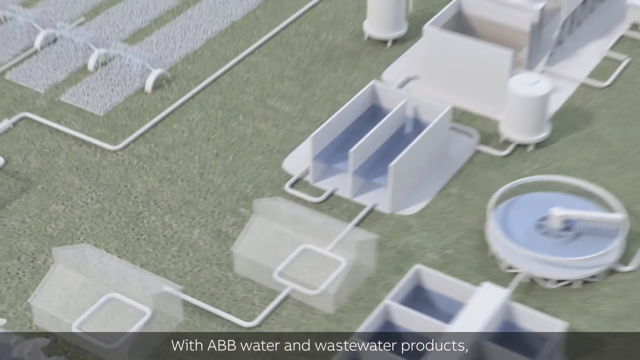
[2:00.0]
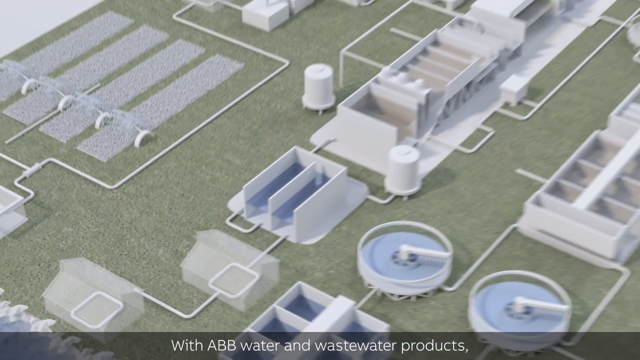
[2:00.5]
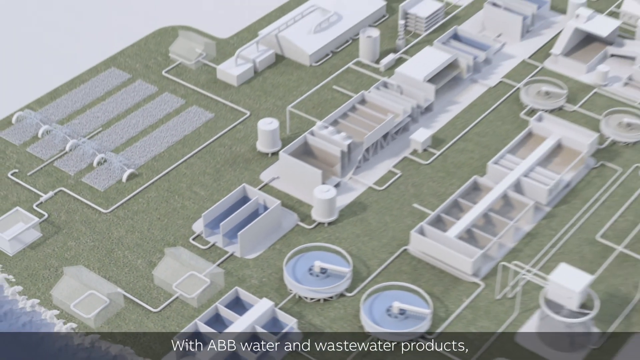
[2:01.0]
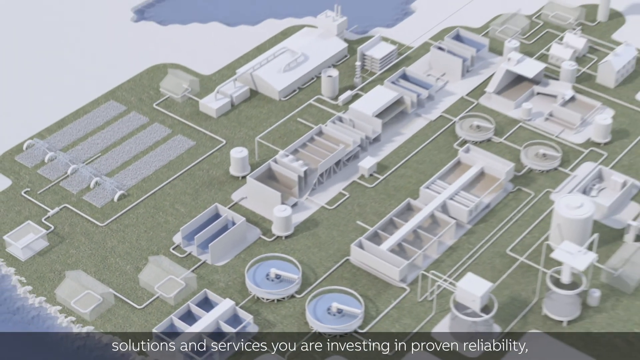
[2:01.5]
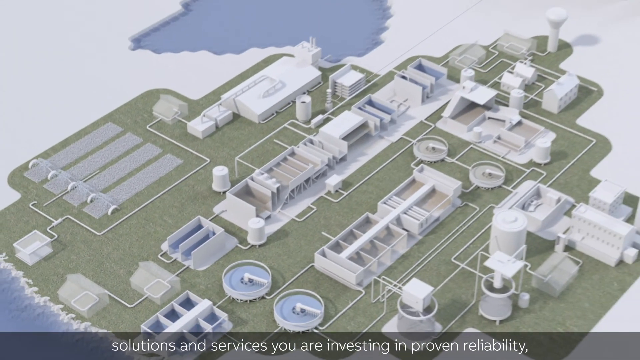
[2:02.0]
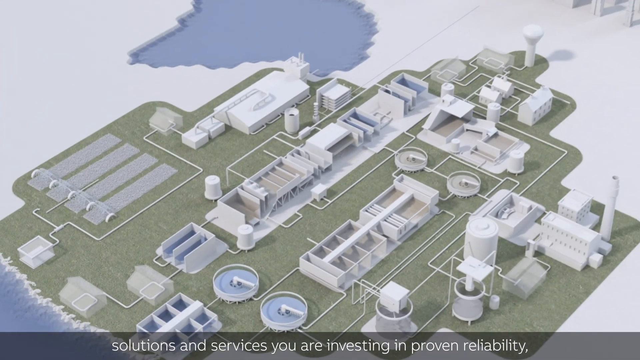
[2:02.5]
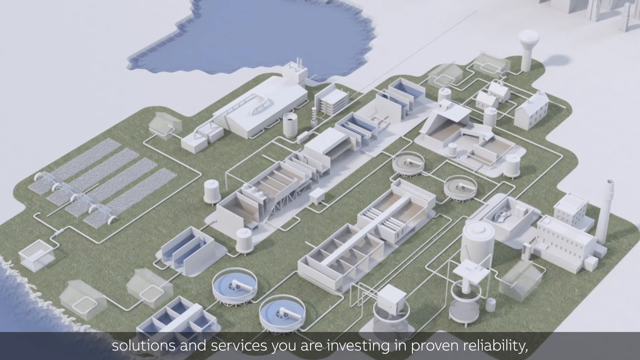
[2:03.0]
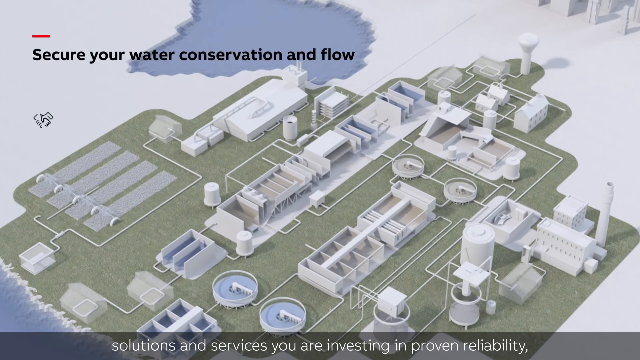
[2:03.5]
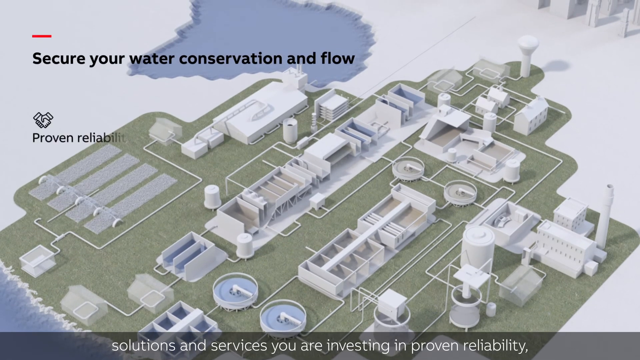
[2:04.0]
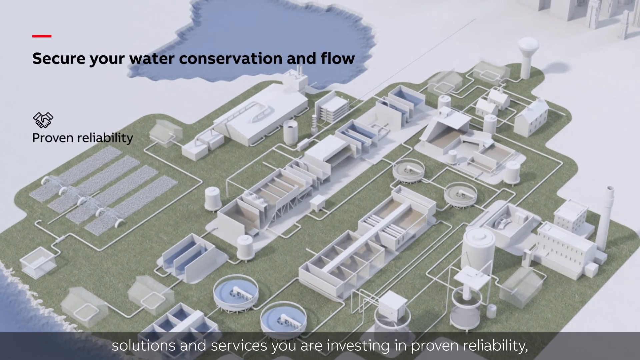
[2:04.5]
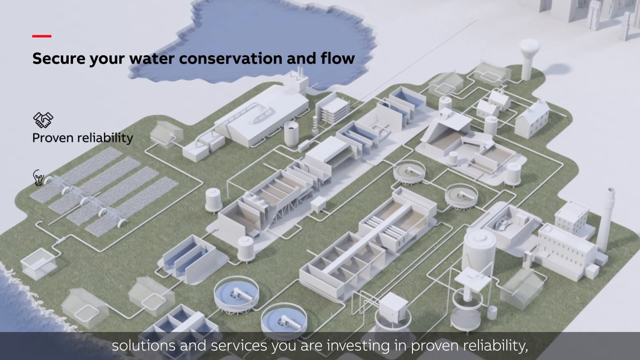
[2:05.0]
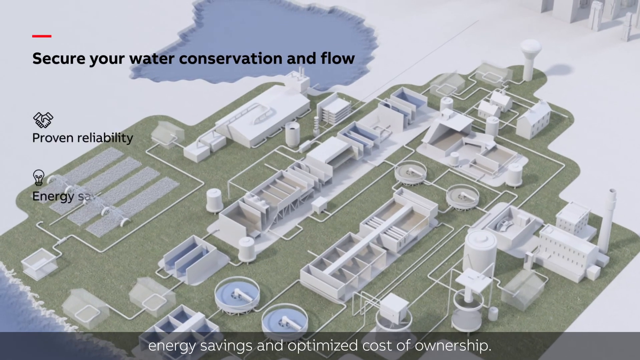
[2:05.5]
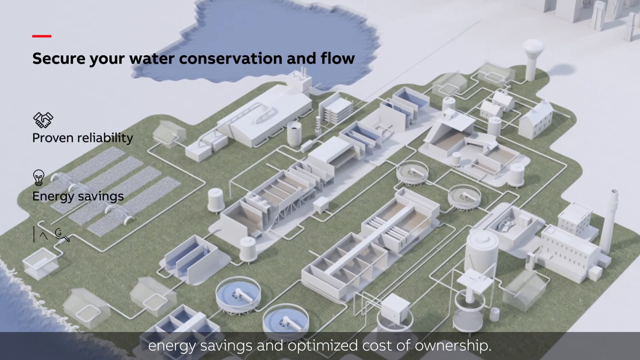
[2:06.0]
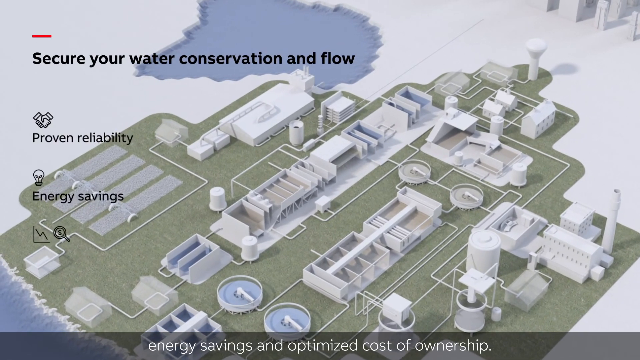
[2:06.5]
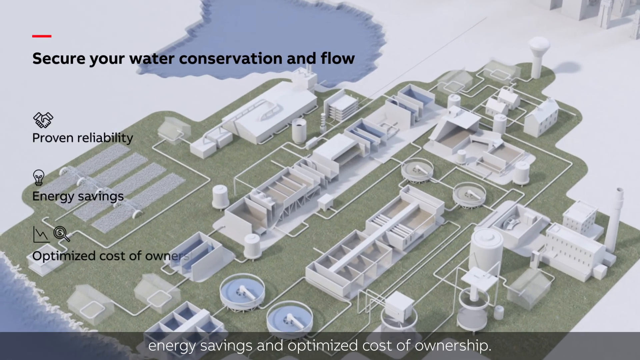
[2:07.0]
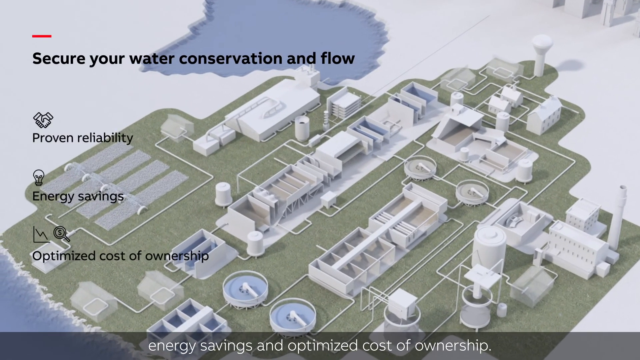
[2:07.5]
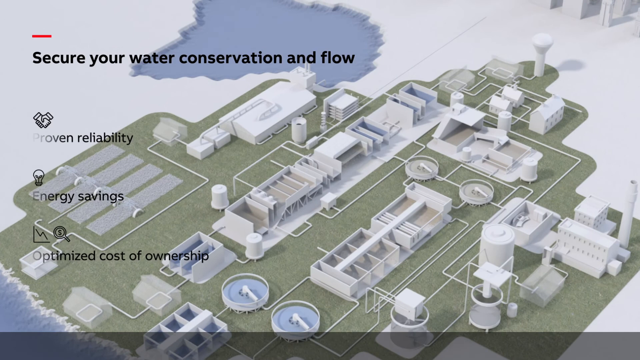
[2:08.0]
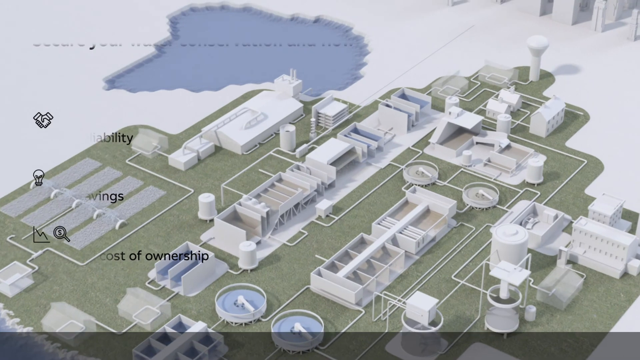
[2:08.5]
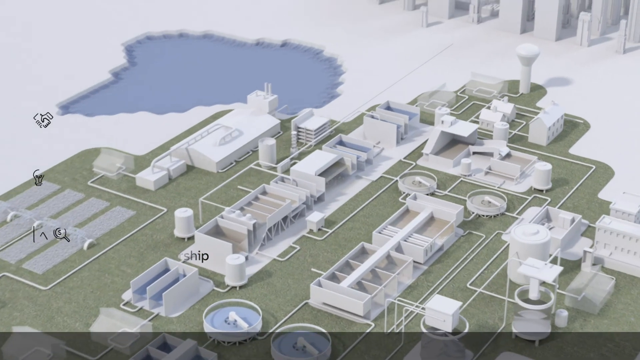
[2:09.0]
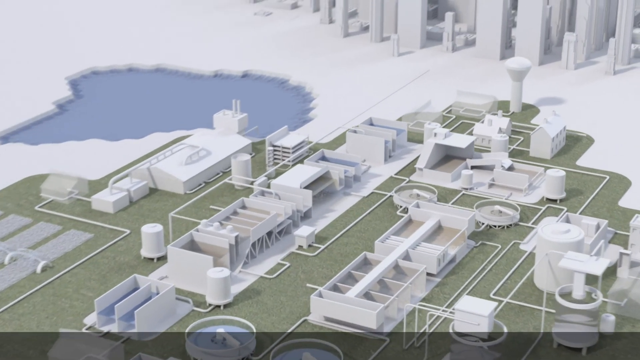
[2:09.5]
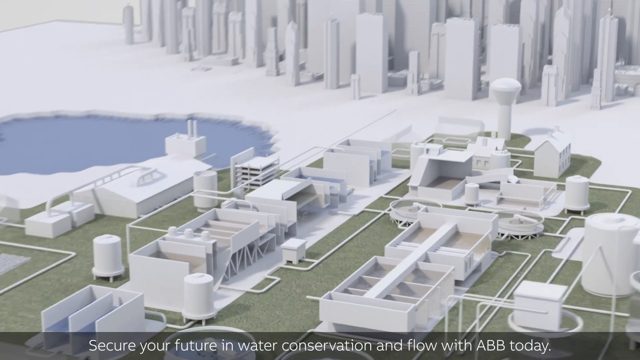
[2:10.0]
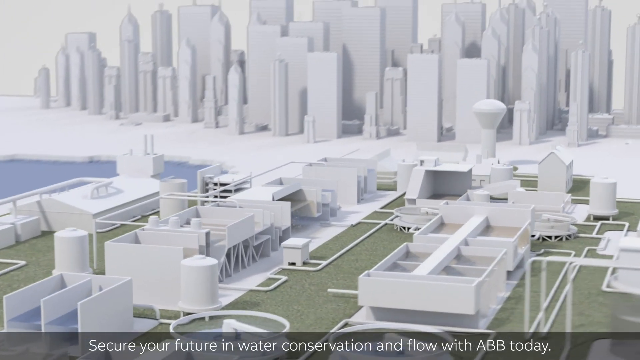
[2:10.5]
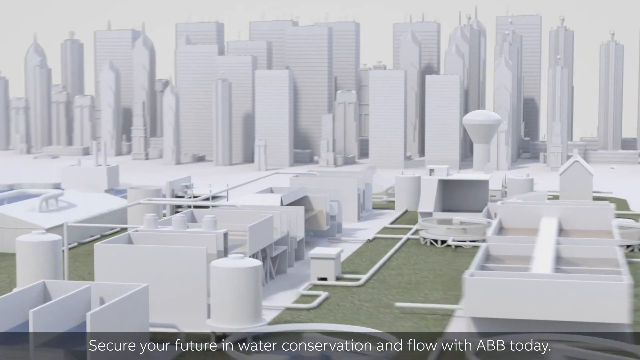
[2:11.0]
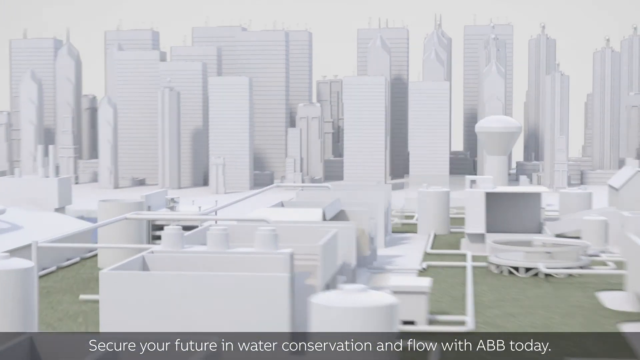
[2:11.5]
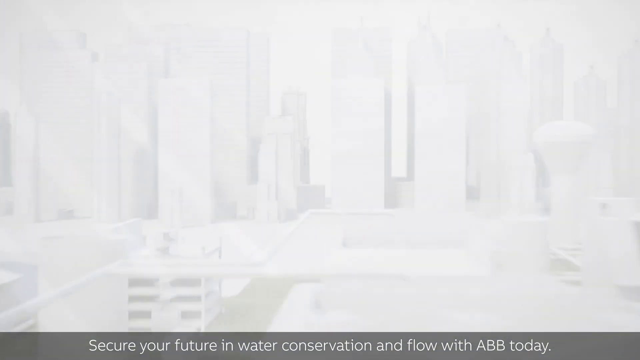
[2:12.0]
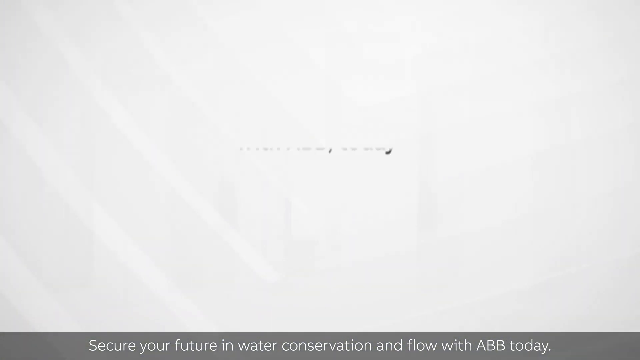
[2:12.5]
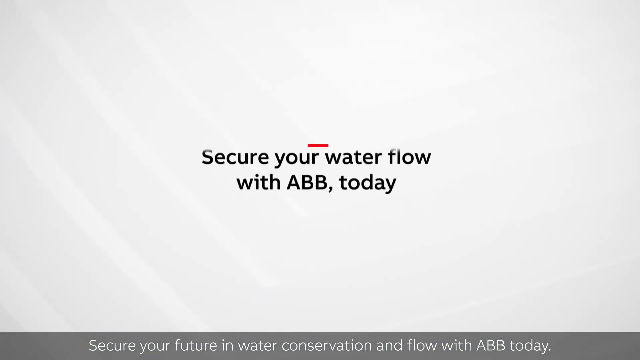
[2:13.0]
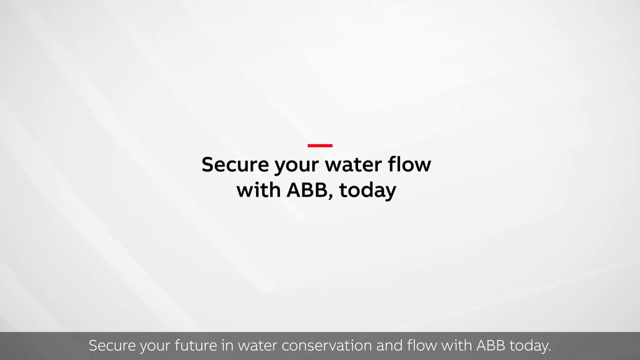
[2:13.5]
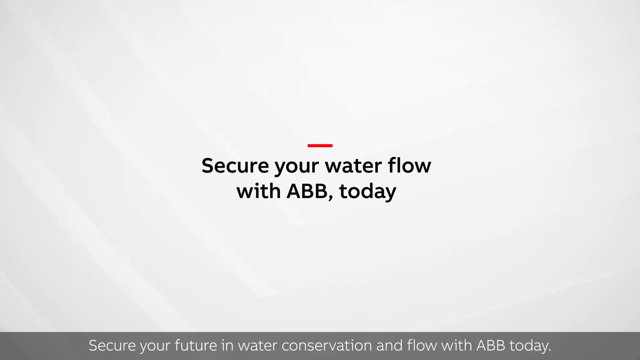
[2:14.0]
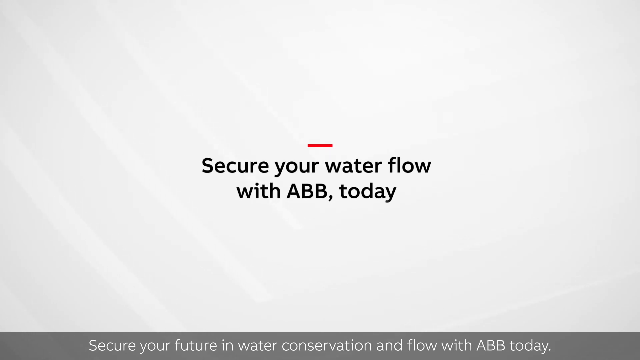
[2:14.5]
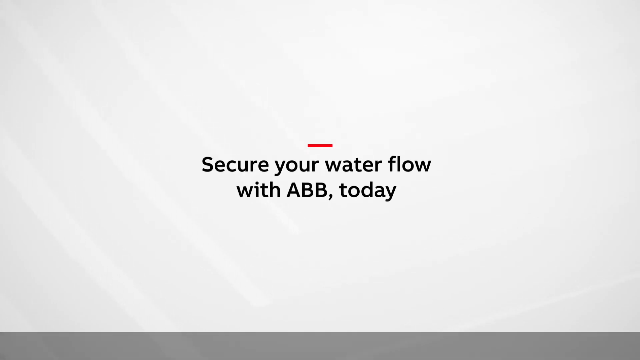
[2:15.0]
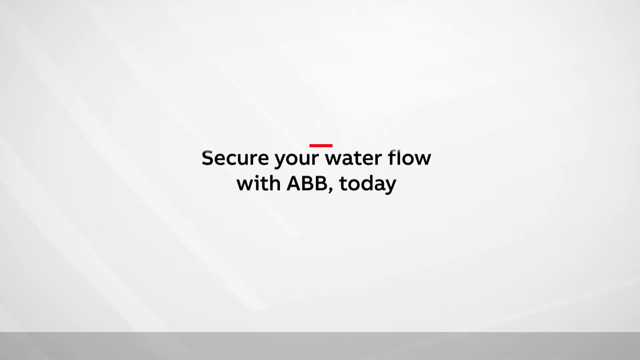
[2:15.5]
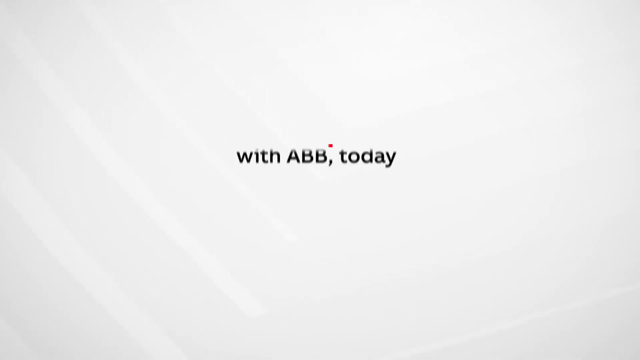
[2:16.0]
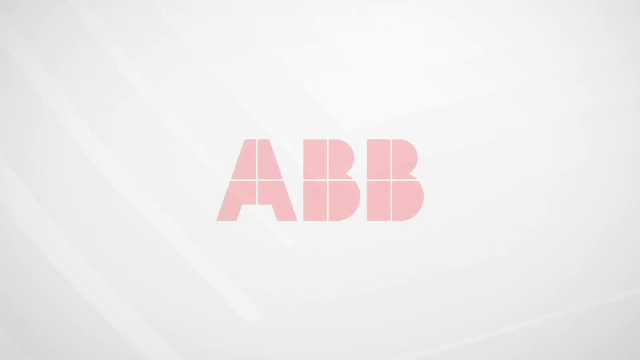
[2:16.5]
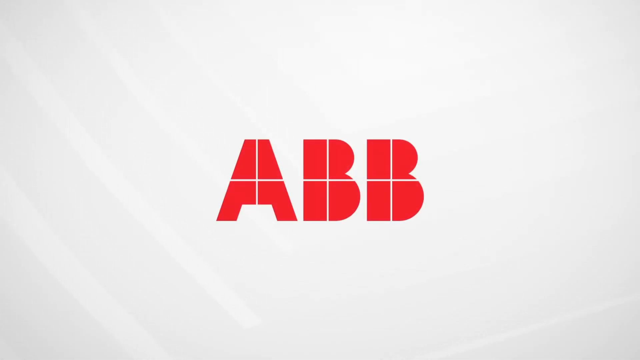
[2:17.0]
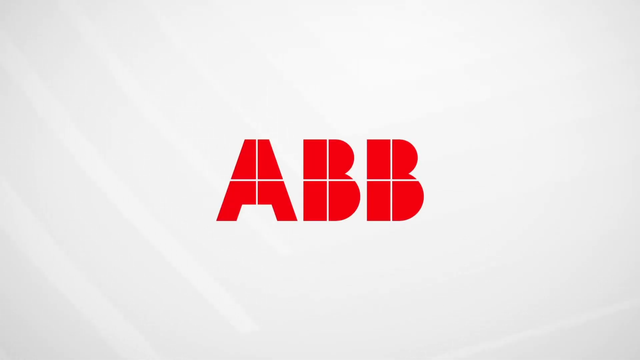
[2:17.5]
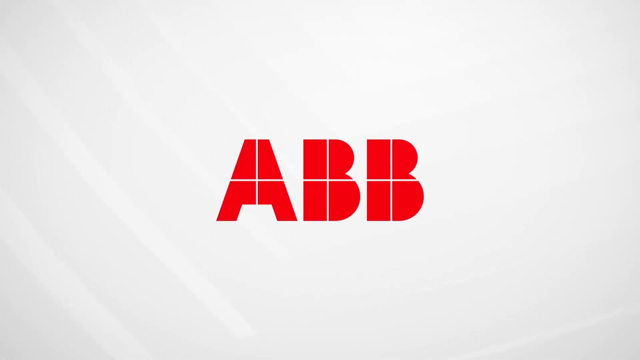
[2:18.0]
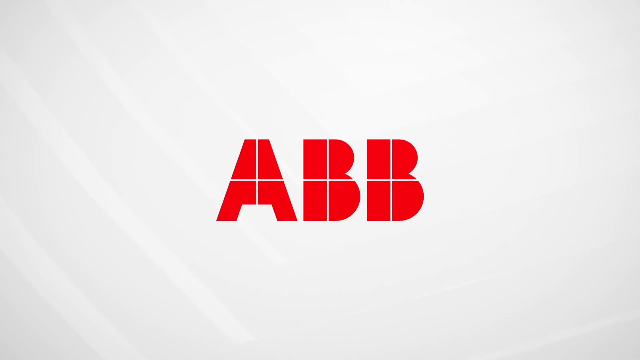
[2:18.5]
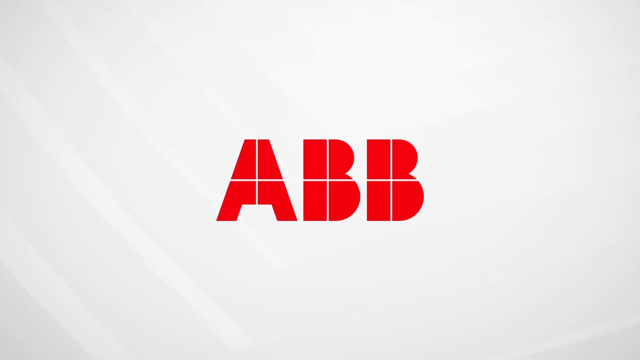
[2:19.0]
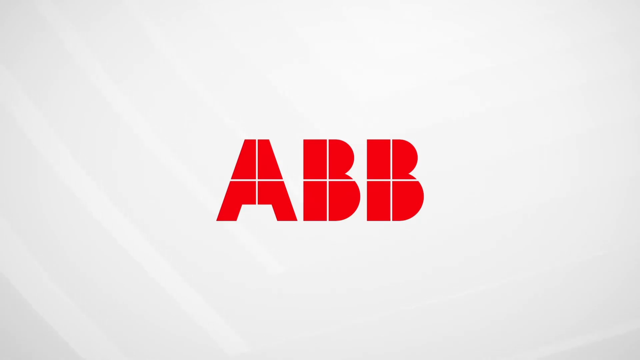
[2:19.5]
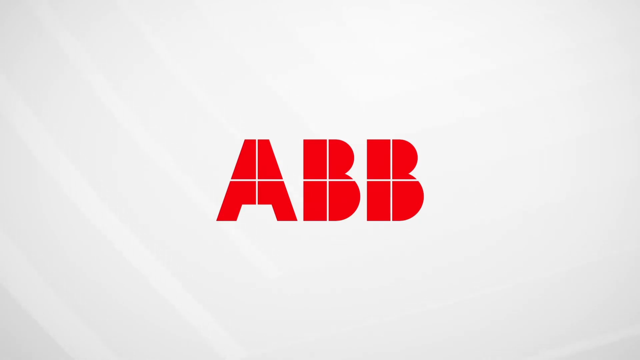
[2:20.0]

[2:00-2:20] The diagram shows towns being supplied with a lot of water, along with irrigation and industrial water treatment, and three pumps. A pipe supplies the towns and buildings. Total cost of ownership, operational costs and capital costs are shown. There is a fault on one of the pumps, and water is apparently leaking from it; the diagram shows where the fault is. Under condition monitoring, the three people are monitoring that pump.